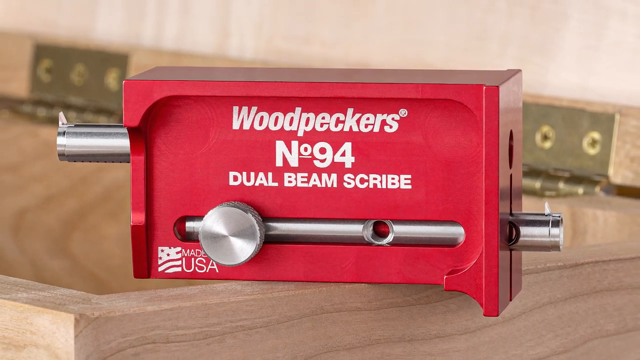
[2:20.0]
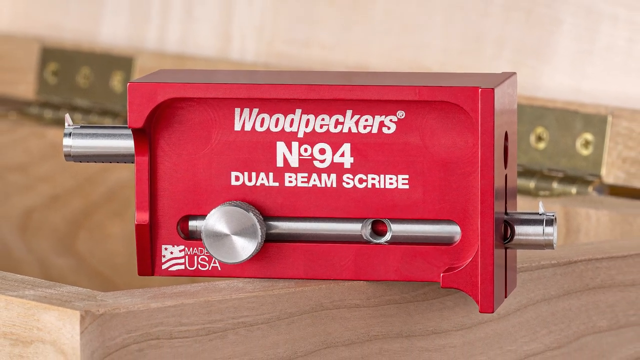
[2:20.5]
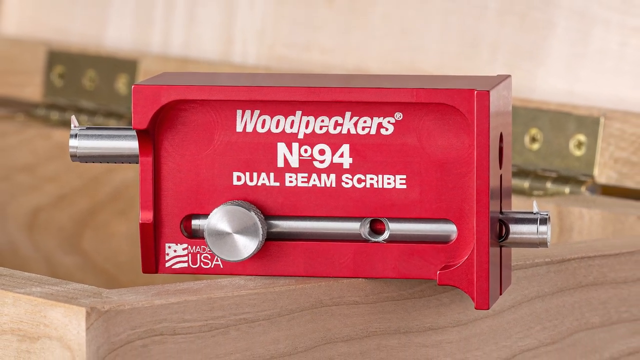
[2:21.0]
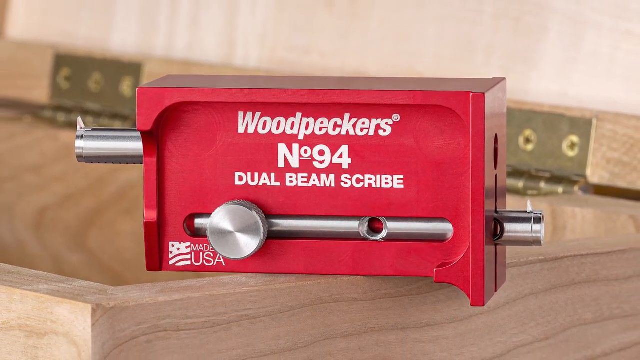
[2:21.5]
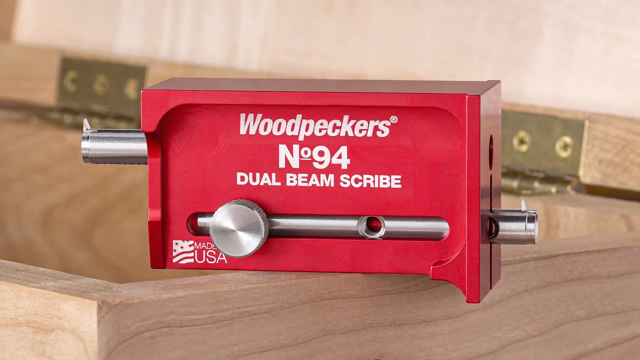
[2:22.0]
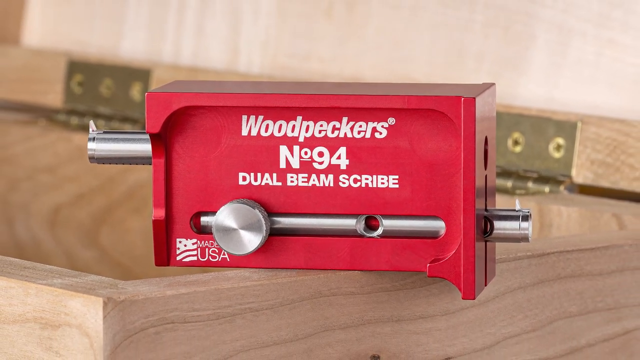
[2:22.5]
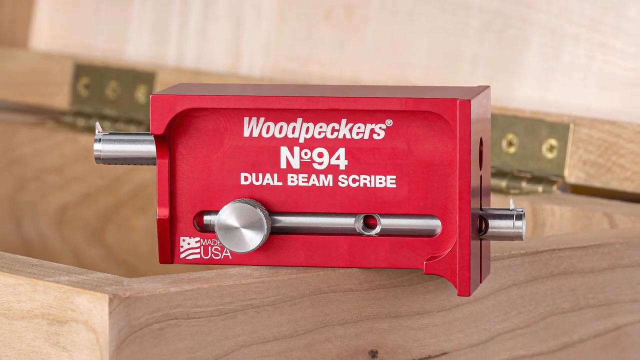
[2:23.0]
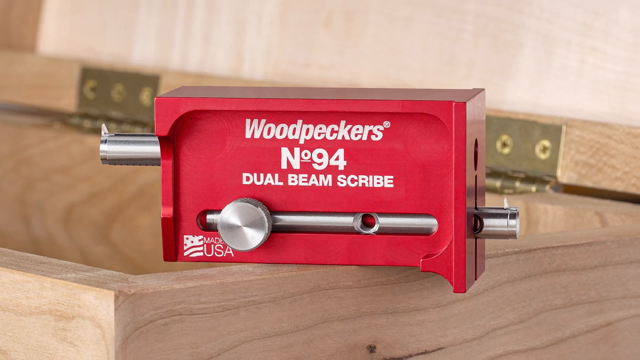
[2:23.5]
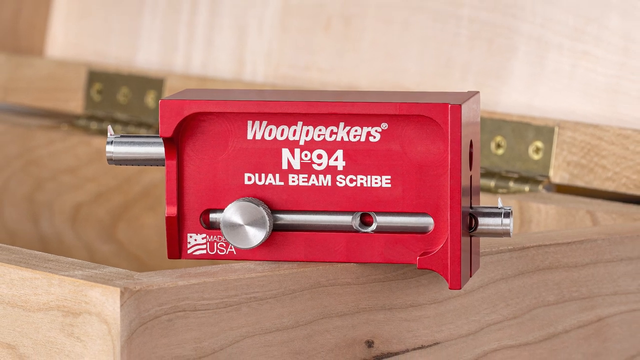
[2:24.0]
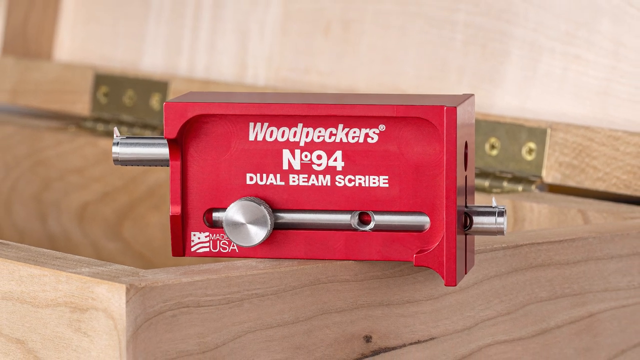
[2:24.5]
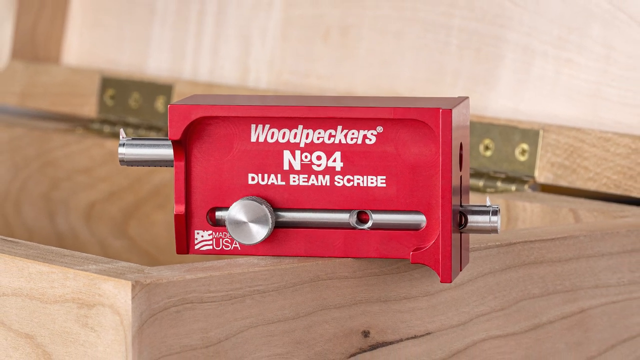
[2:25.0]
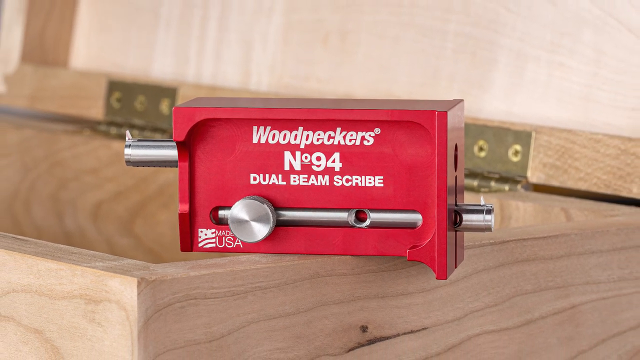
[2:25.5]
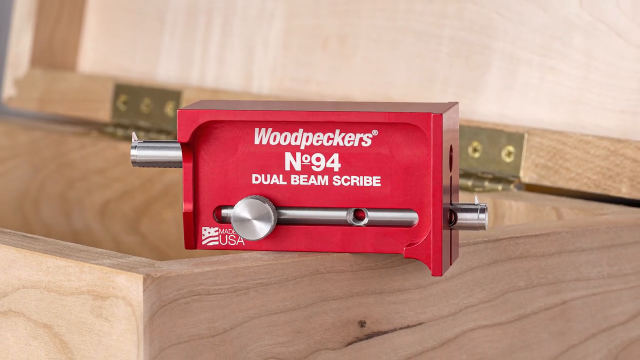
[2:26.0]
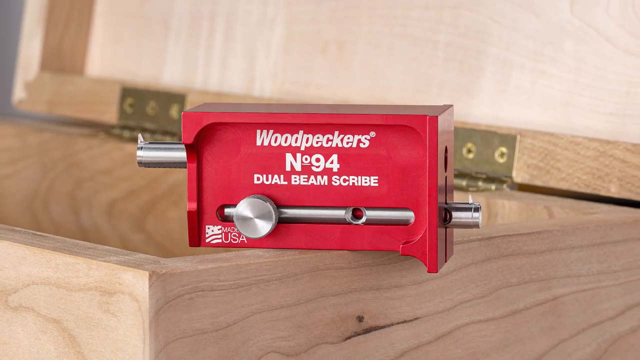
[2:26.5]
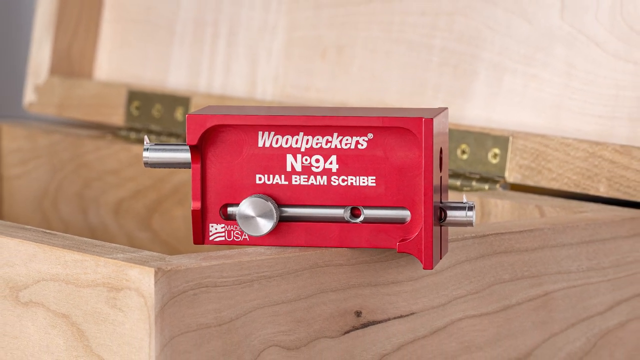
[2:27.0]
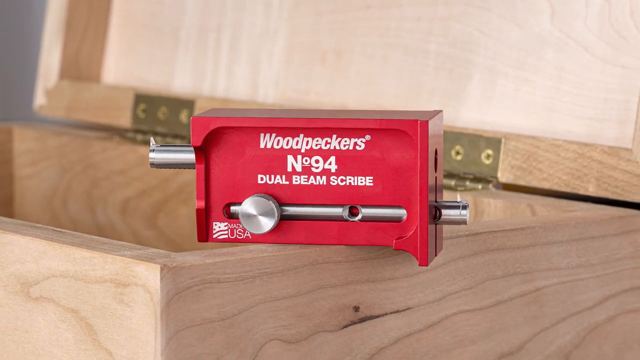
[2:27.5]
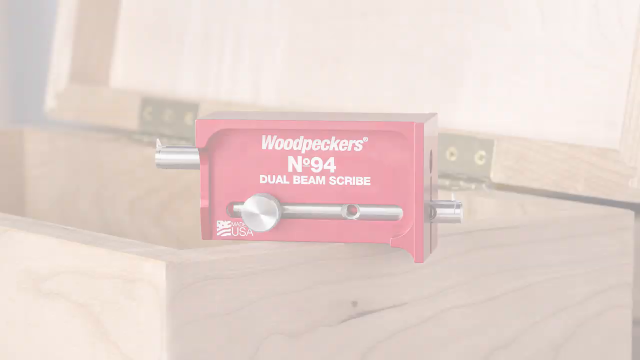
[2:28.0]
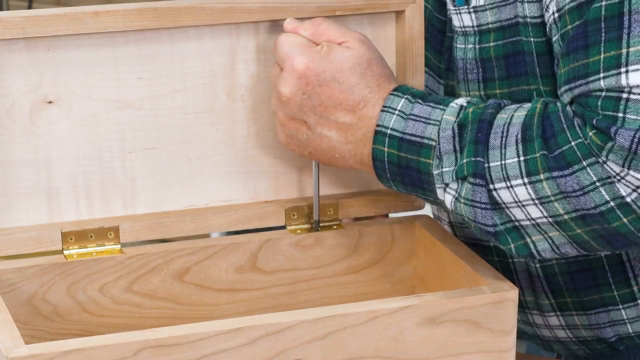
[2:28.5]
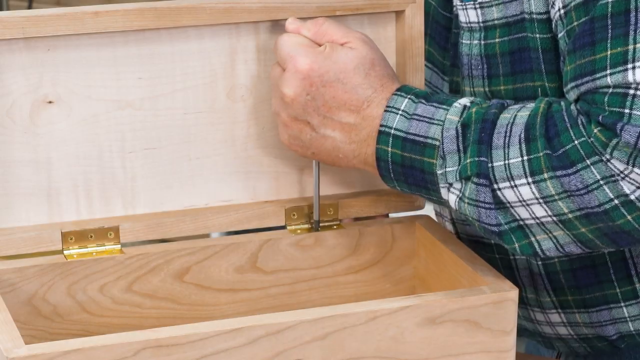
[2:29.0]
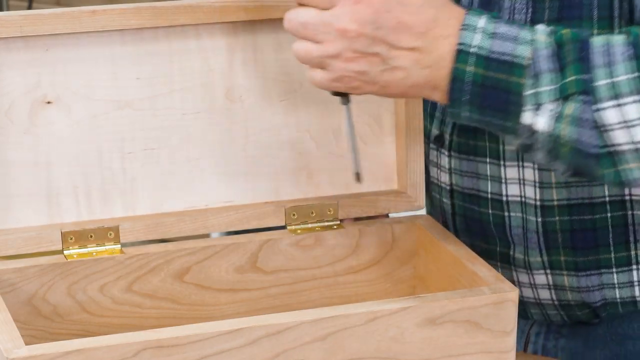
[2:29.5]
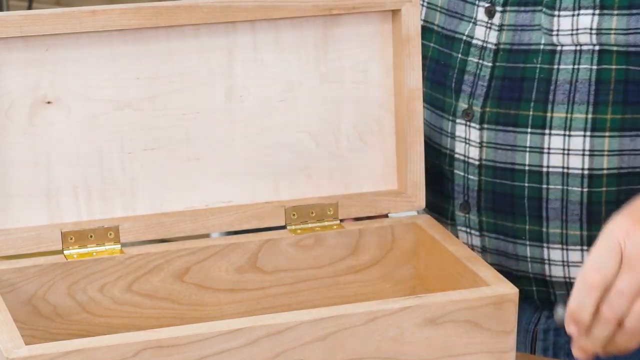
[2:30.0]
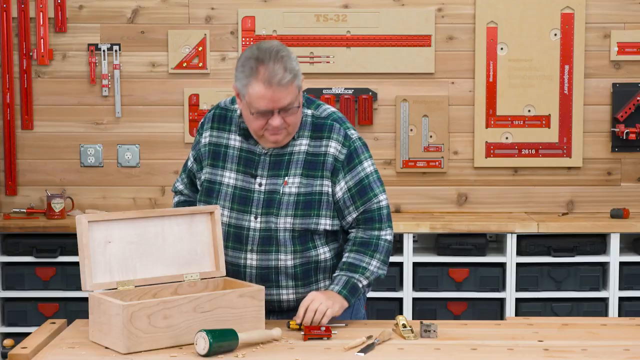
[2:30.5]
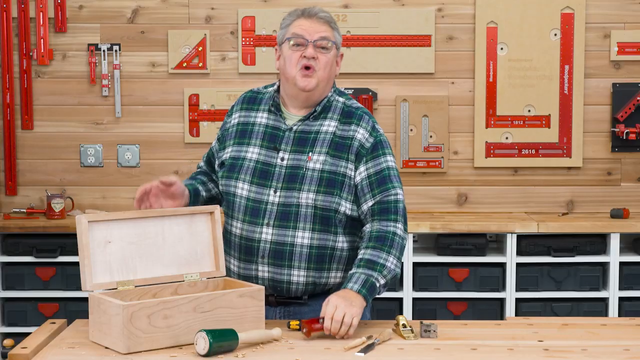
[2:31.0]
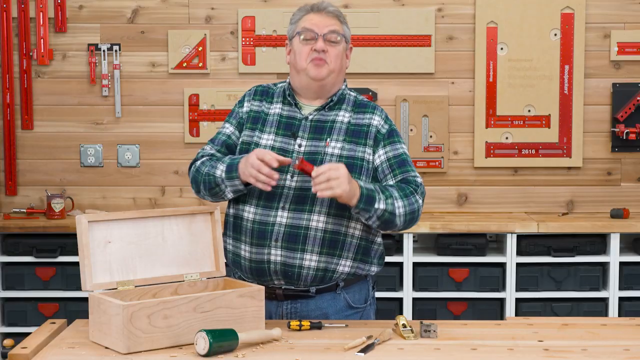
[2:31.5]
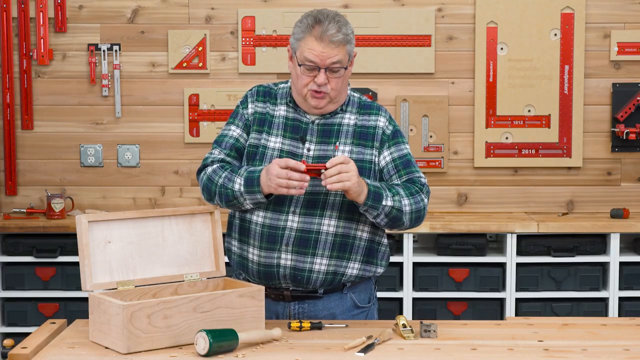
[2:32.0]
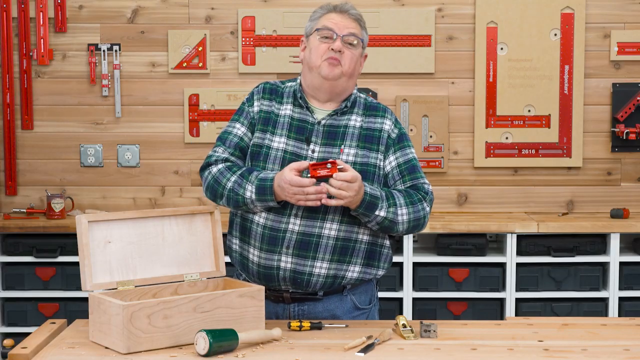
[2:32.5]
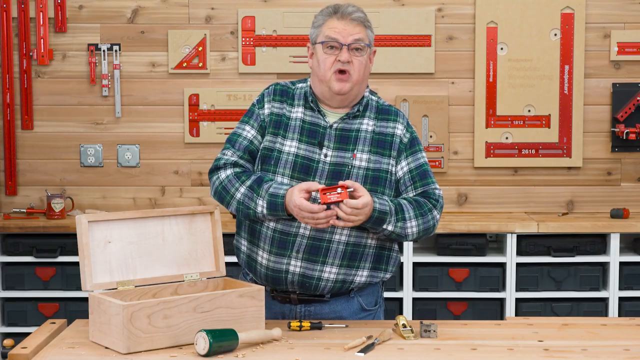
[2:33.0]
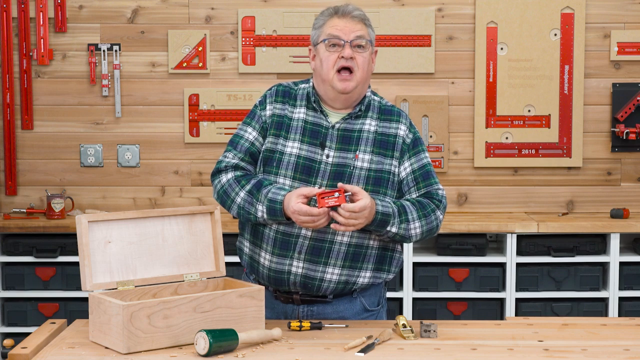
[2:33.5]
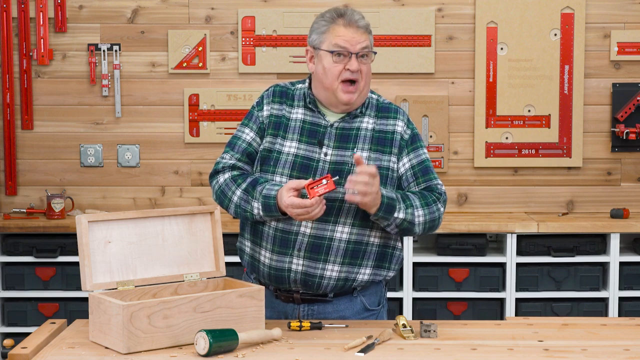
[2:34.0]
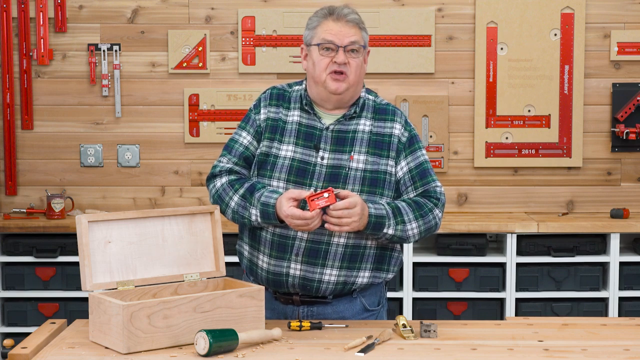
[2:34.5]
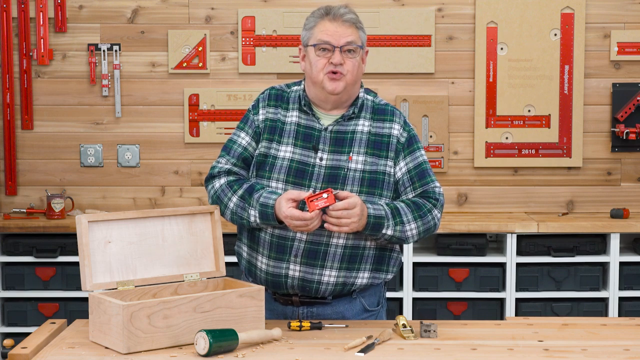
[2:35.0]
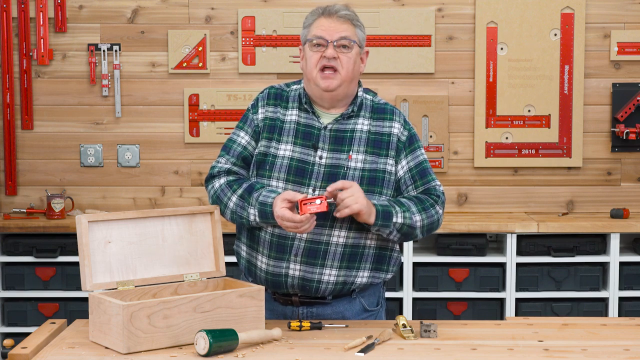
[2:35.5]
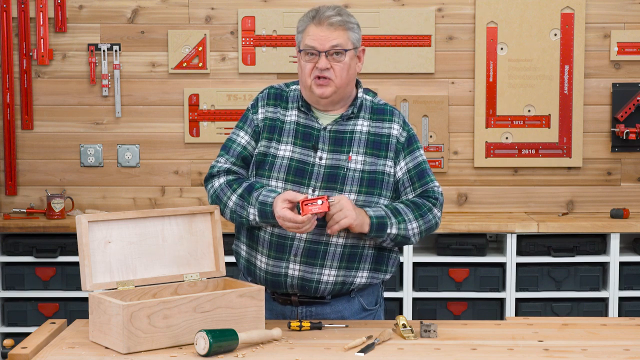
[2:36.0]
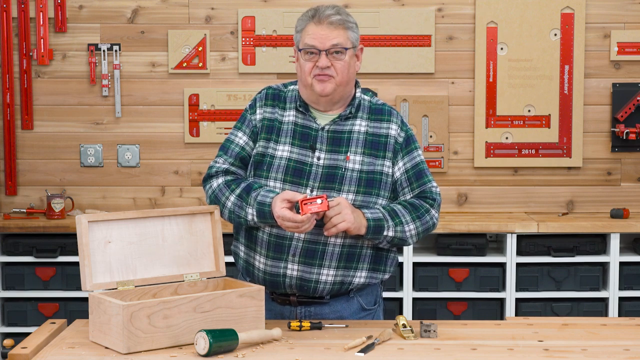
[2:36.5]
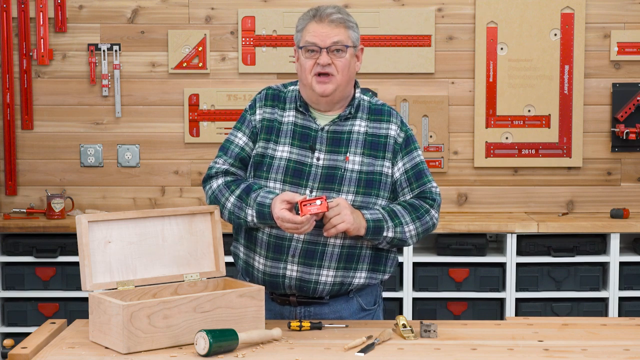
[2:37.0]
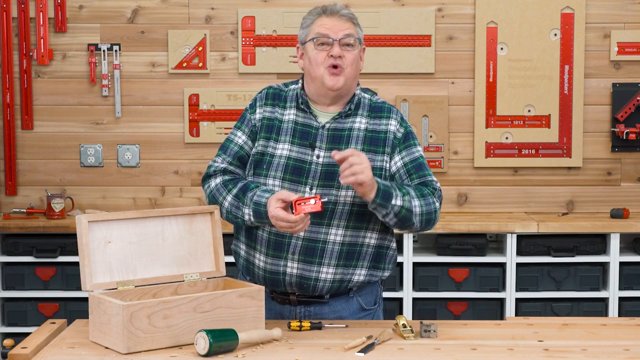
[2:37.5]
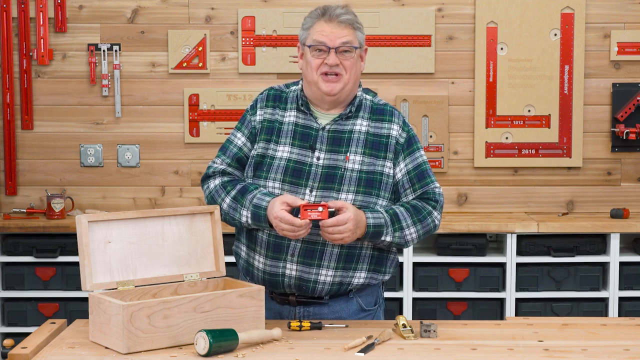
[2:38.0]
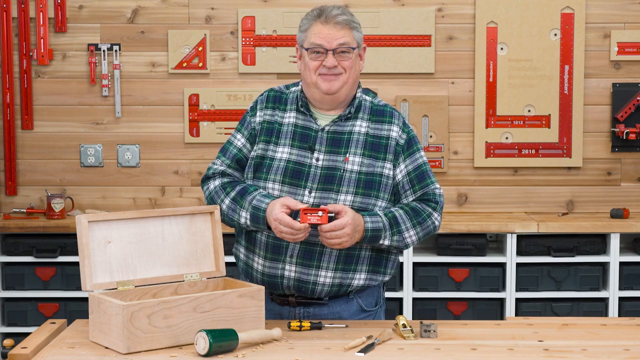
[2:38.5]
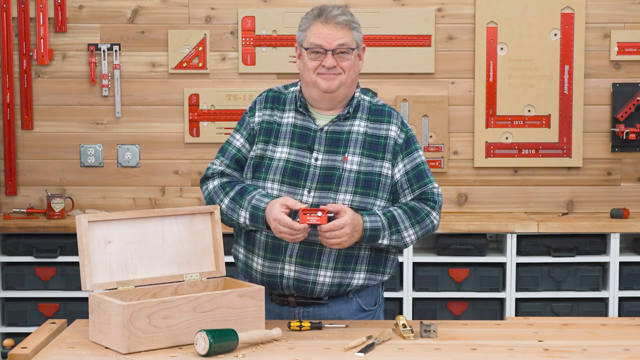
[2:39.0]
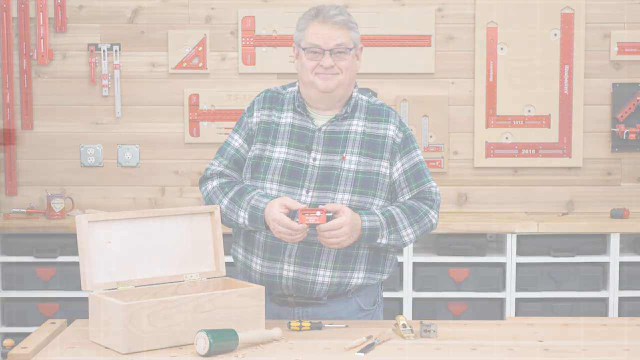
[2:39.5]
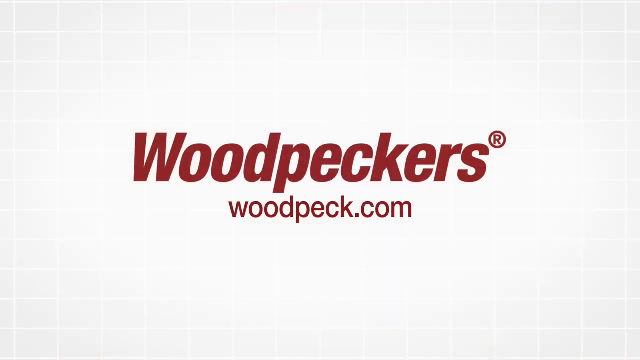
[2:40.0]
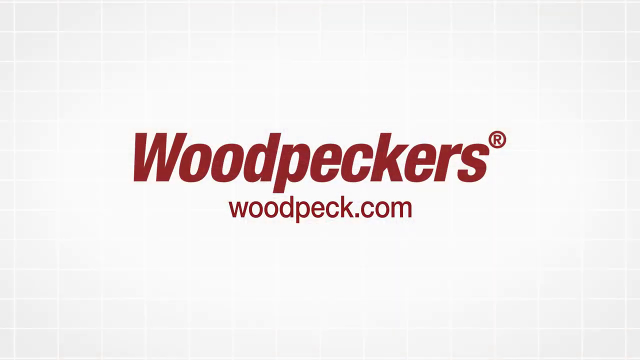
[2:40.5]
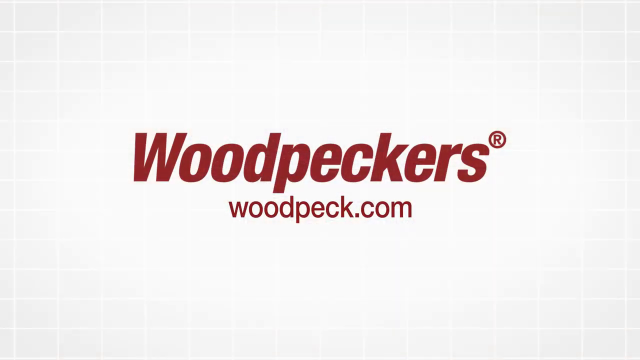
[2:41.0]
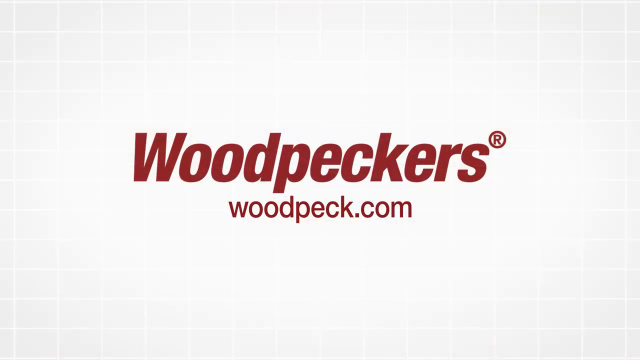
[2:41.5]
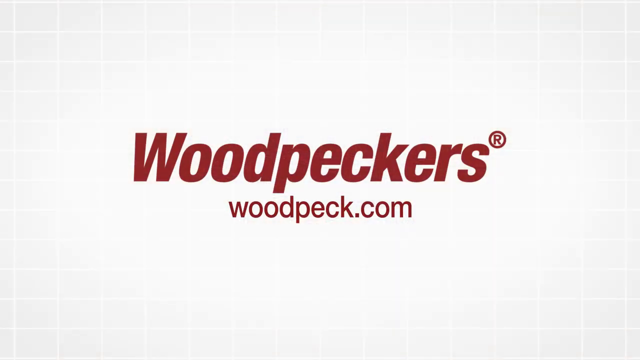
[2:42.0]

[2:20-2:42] The Woodpeckers No. 94 Dual Beam Scribe is shown from the side, reading "Made in USA". The camera zooms out. At the very end, the man is shown in his workshop with the finished product and a lot of tools lying around. The text "woodpeck.com" appears, along with the Woodpeckers name and a trademark mark.